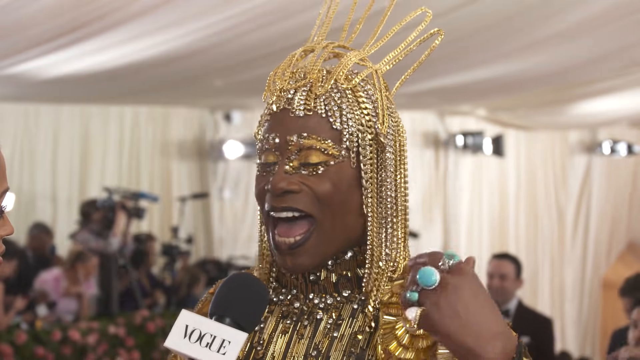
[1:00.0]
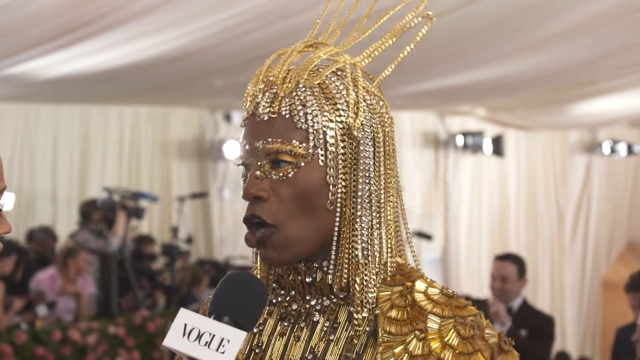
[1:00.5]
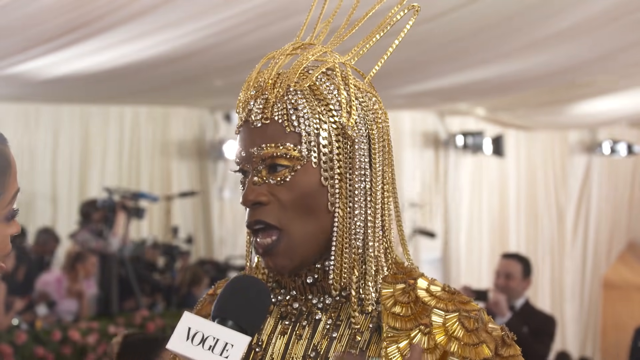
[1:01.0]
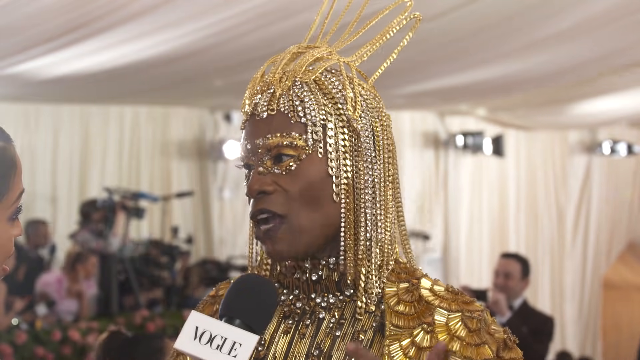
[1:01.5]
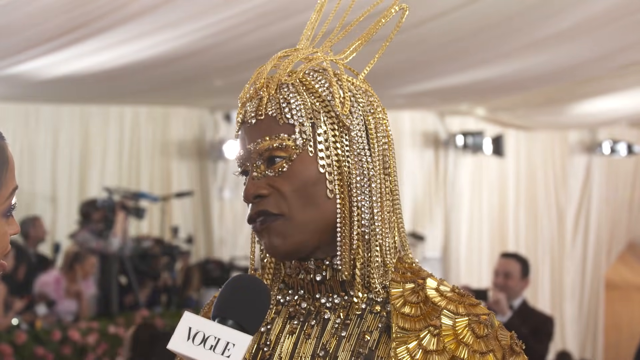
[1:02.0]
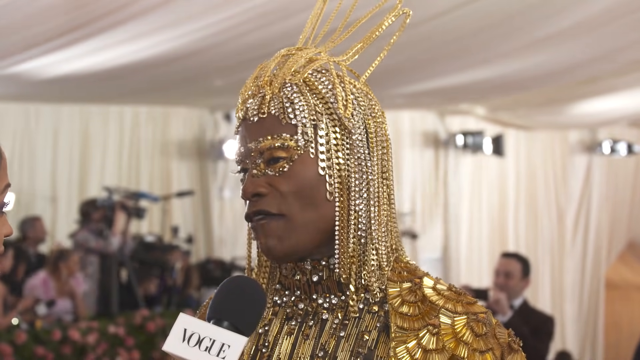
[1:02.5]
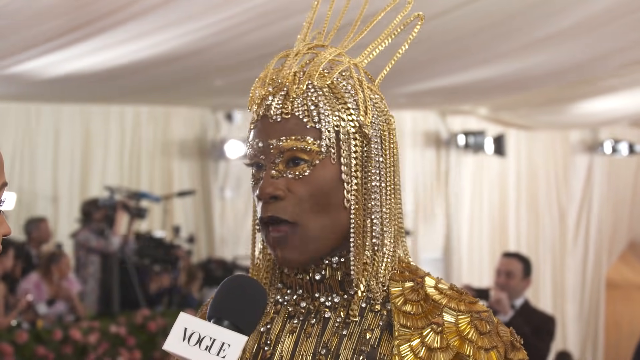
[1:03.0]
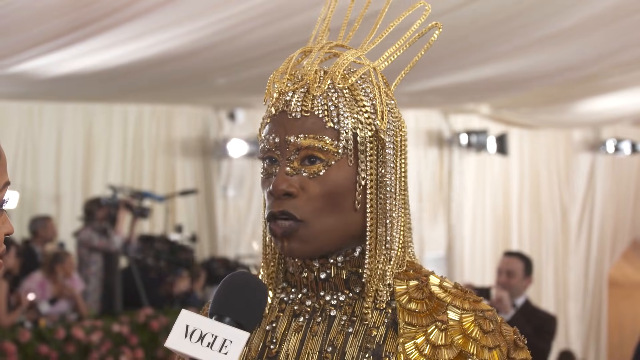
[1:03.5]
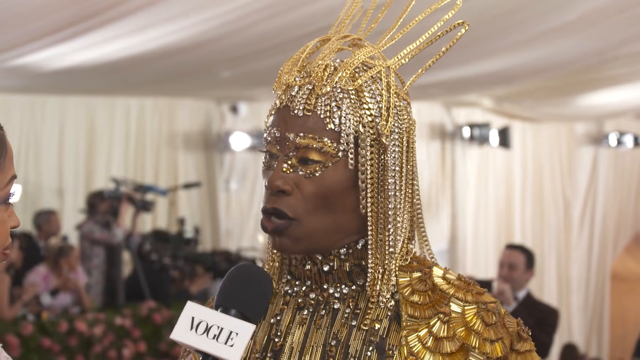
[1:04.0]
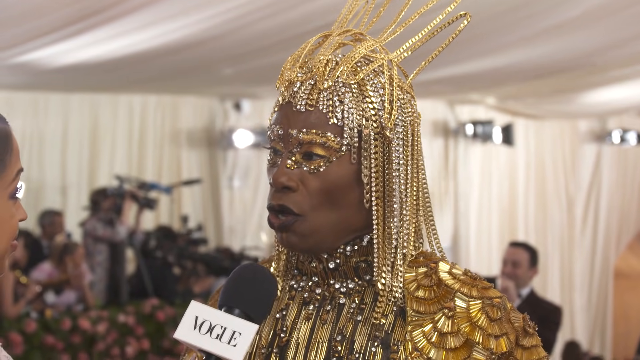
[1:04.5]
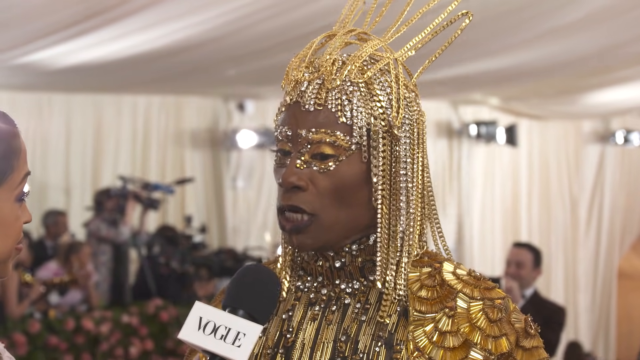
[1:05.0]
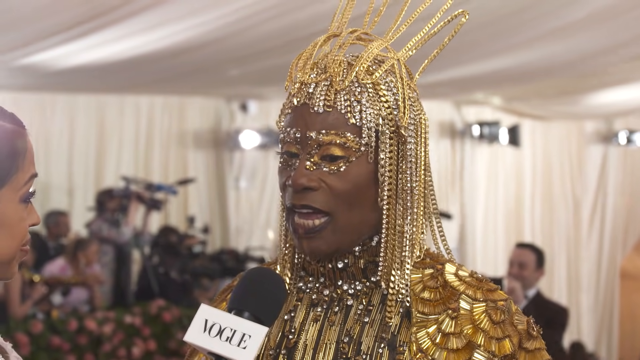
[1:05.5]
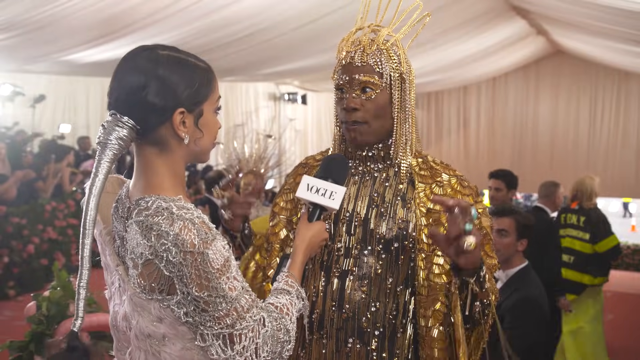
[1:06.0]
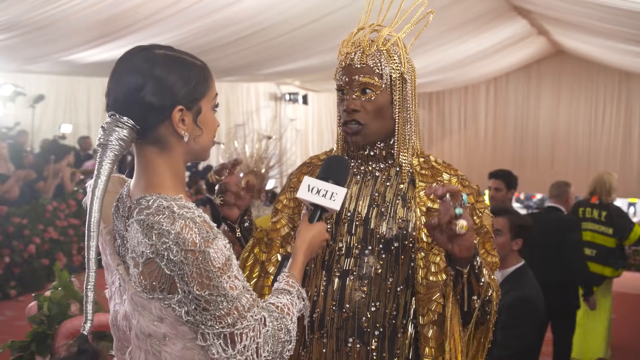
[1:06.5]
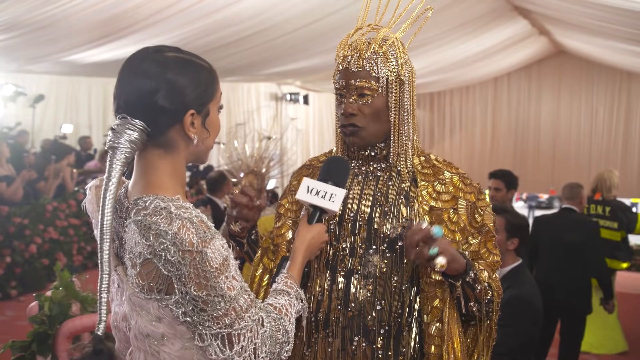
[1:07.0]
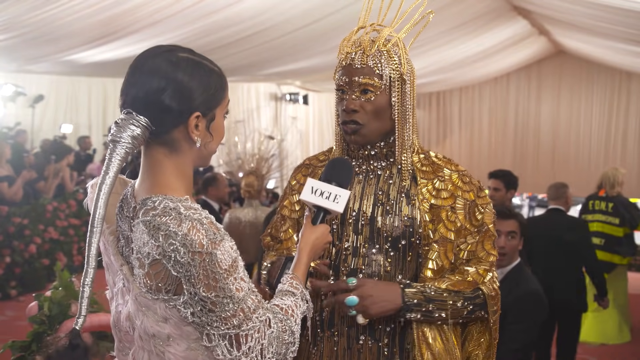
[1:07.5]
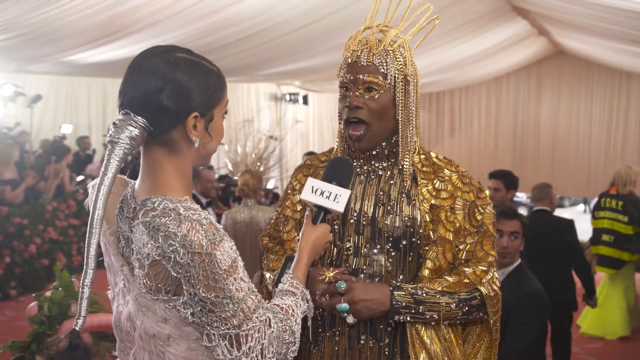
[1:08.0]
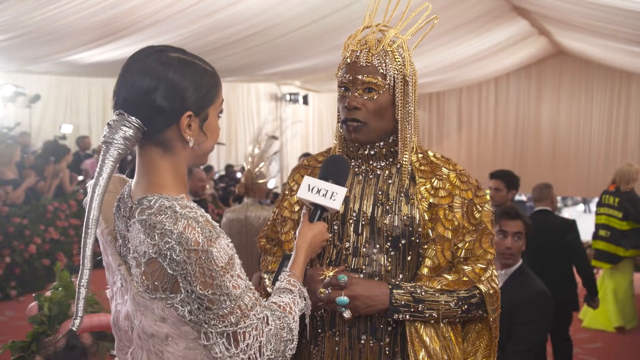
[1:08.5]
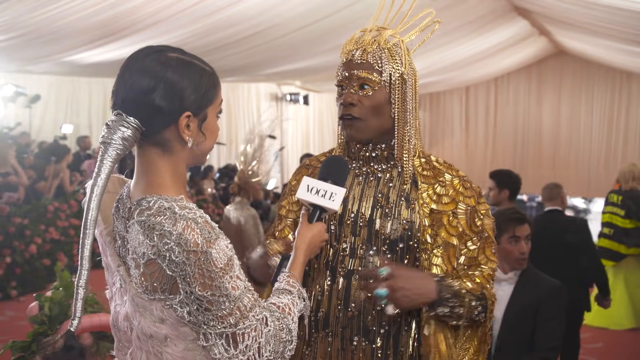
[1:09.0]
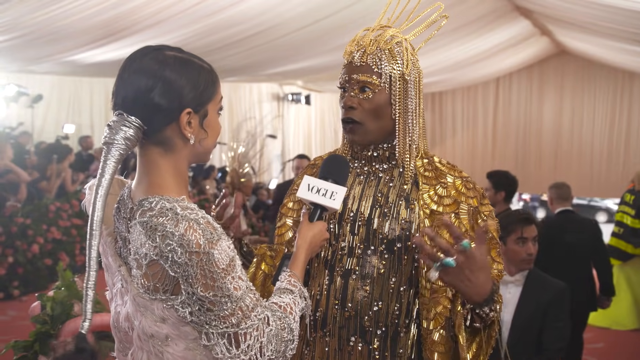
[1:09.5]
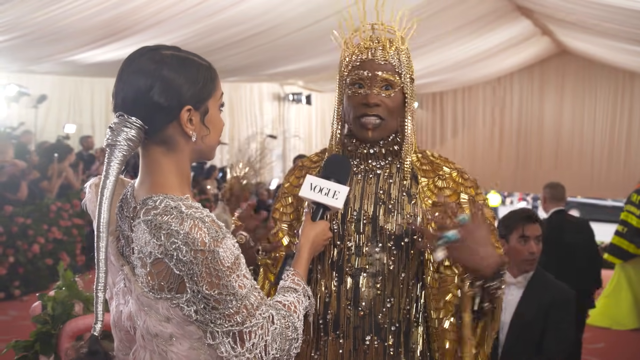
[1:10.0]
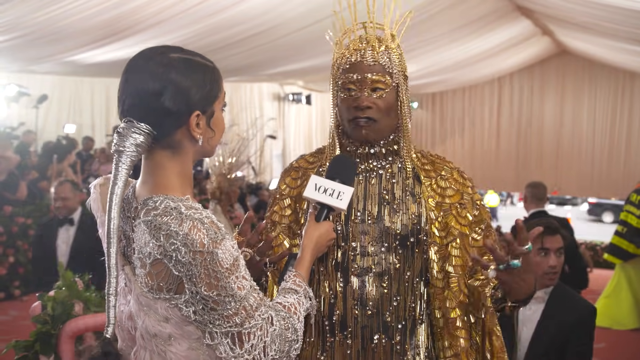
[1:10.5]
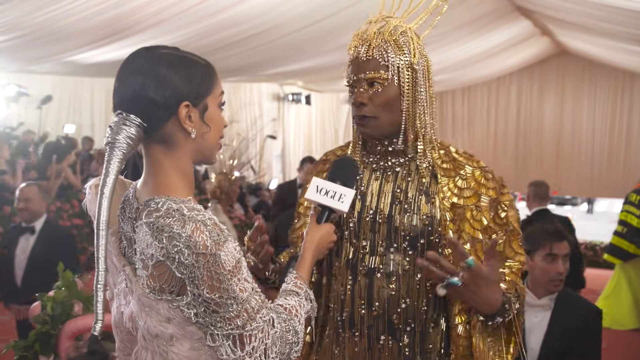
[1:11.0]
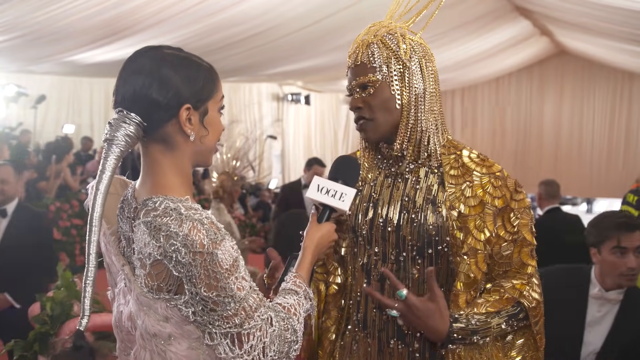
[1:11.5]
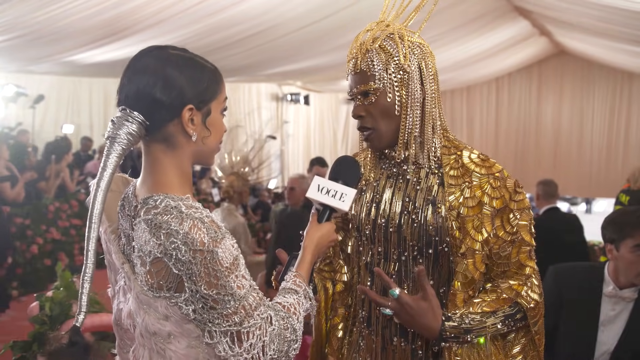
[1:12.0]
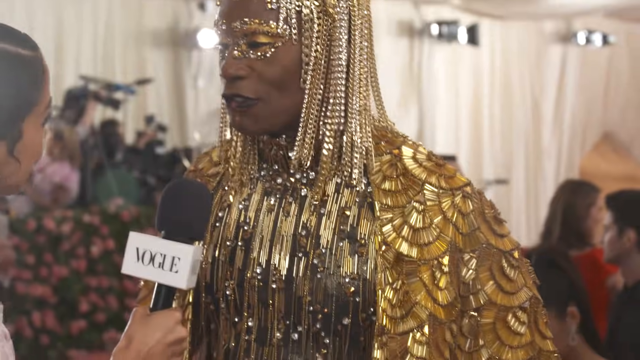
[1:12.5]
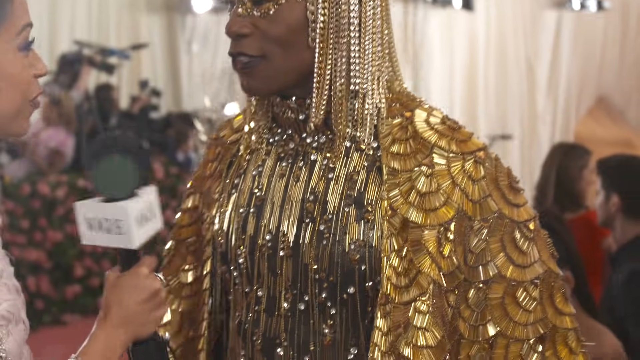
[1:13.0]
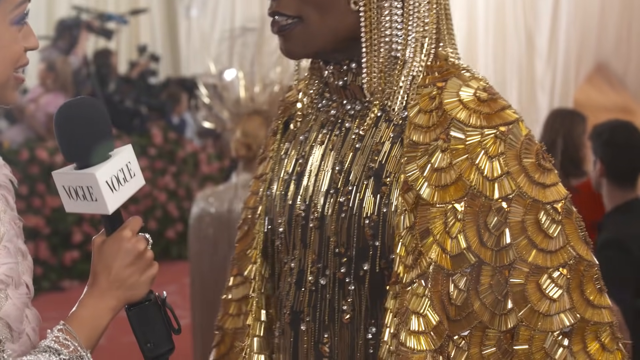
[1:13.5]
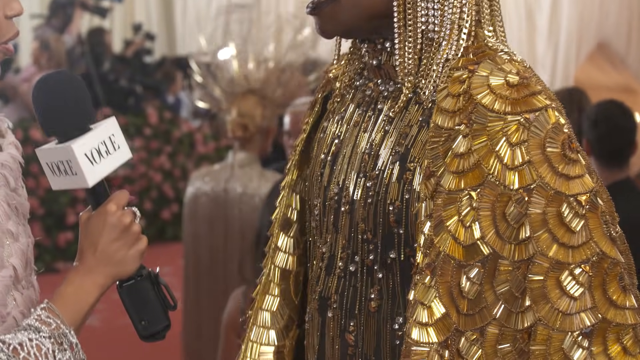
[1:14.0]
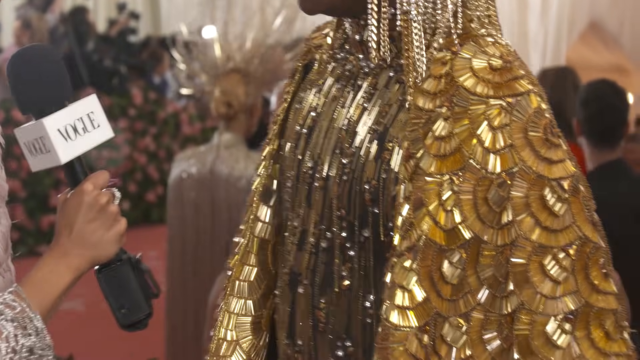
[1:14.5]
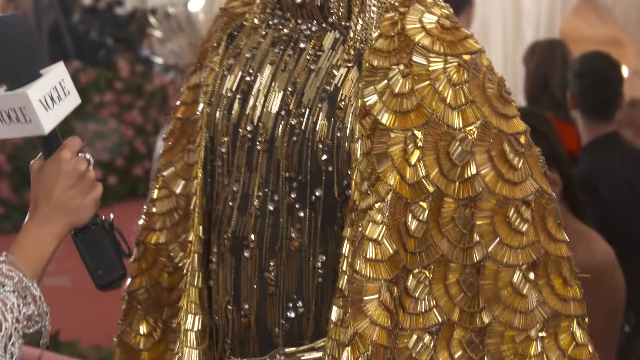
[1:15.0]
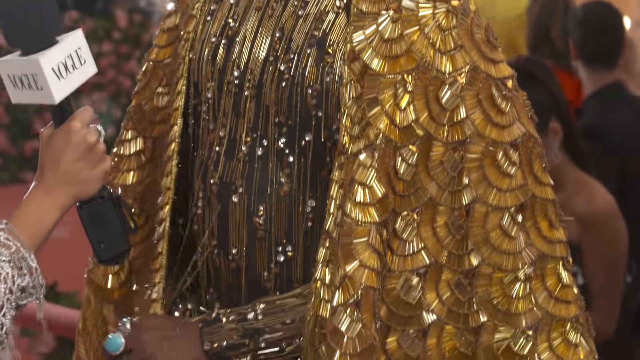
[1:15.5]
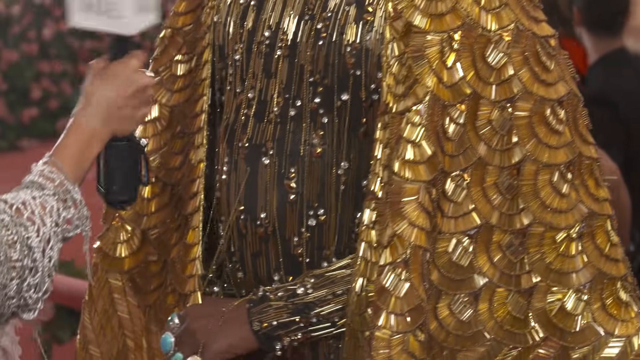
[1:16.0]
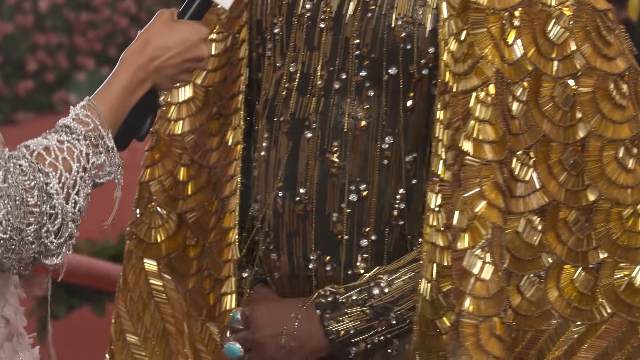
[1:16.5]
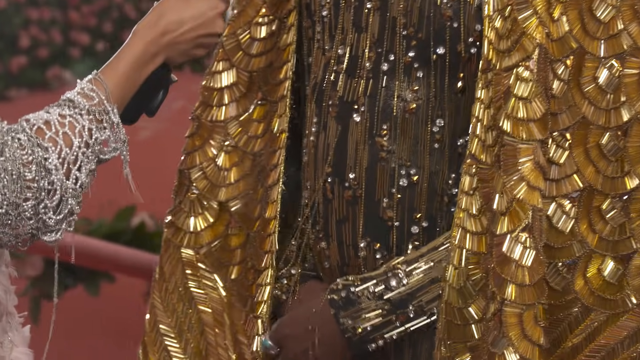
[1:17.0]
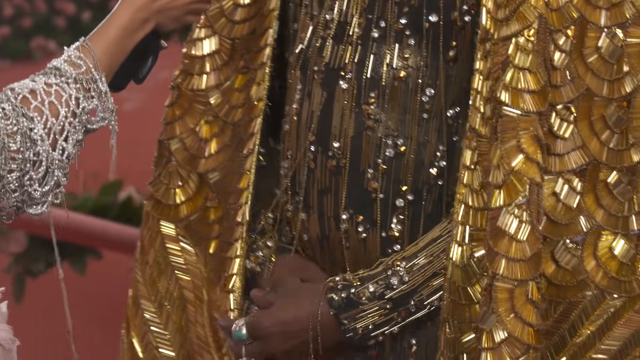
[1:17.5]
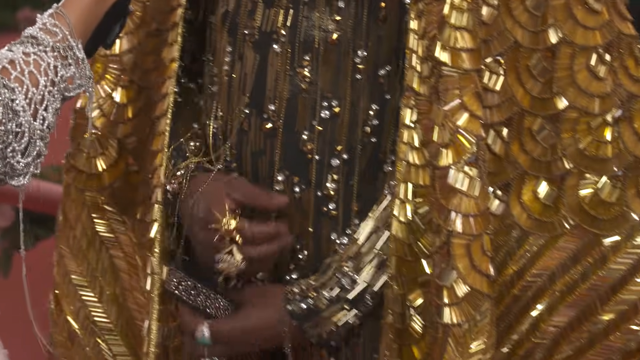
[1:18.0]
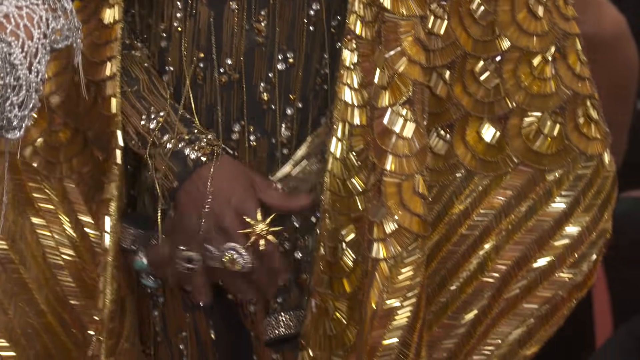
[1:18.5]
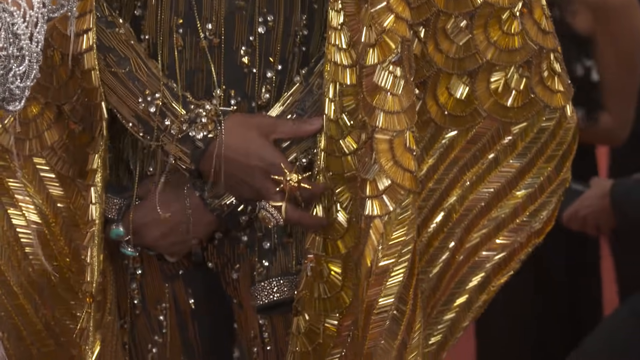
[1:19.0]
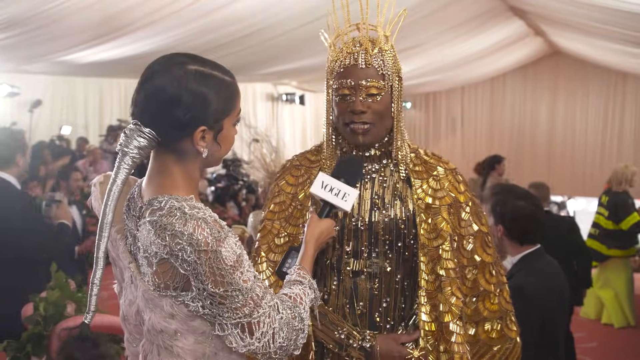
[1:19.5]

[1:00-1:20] An even closer view of Billy's headdress reveals an additional portion at the crown of his head. This gold adornment extends up away from his head in up-and-down shapes and looks like a gold crown extending about 5 inches above his head in several M-shaped formations. Some of the M-shaped formations lie down over his forehead; there appear to be three over his forehead and six extending up from the crown of his head. Billy smiles. Turquoise stones are now visible in the rings on his right hand, different from earlier in the video. In the background, white netting is draped over the room, covering the ceiling and the wall, draped and gathered. Many cameramen in the back record other celebrities as they enter the tent, and there are lots of lights. Billy continues speaking with the reporter, looking at her and tilting his head as he speaks, and gestures with both hands. The camera pans down to his rings and zooms in on them: his hands are folded across his lower body, with a large ring on each finger. In this view, the rings on his left hand appear to have turquoise stones, and he has a ring on each of the four fingers of his right hand, one of which looks like a large gold five-pointed star. Billy smiles, showing white teeth, and wears dark oxblood lipstick; he has high cheekbones.